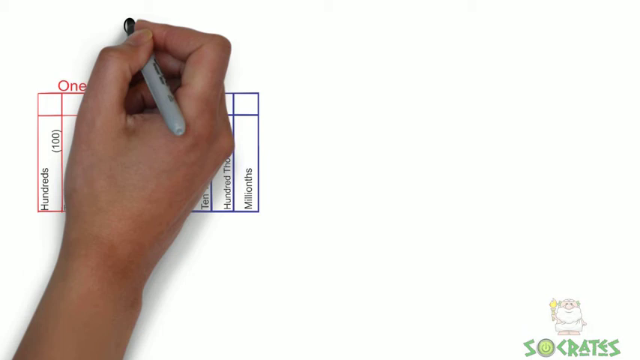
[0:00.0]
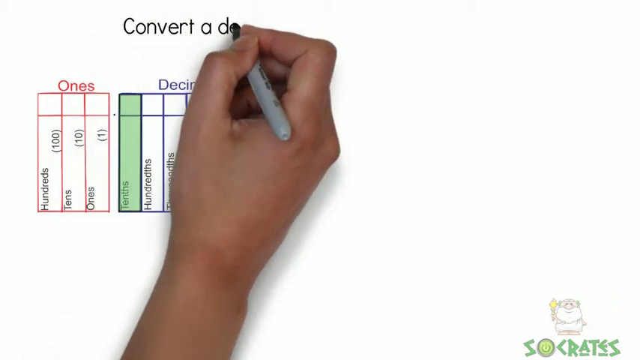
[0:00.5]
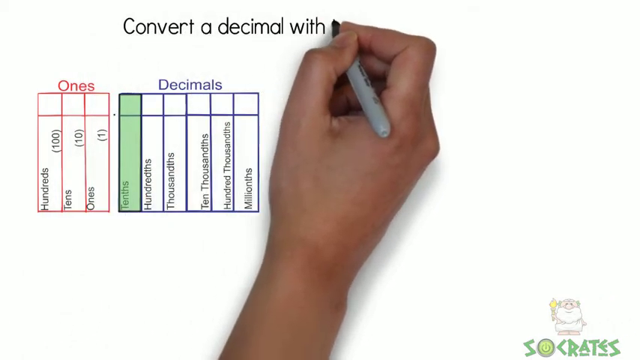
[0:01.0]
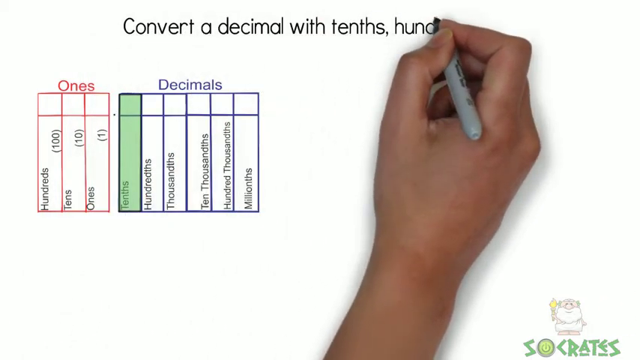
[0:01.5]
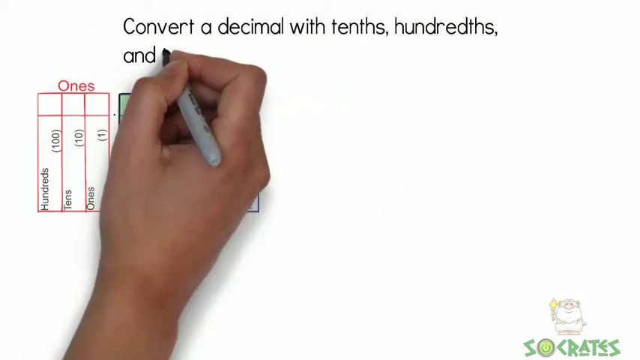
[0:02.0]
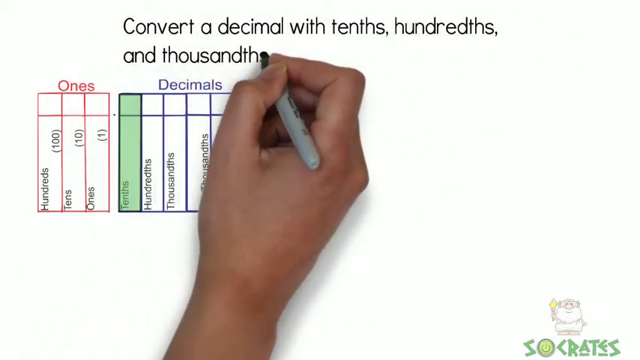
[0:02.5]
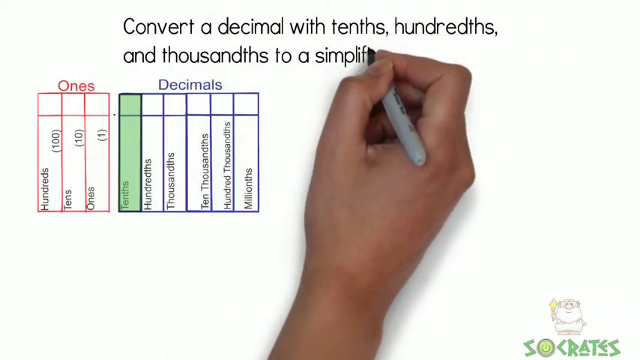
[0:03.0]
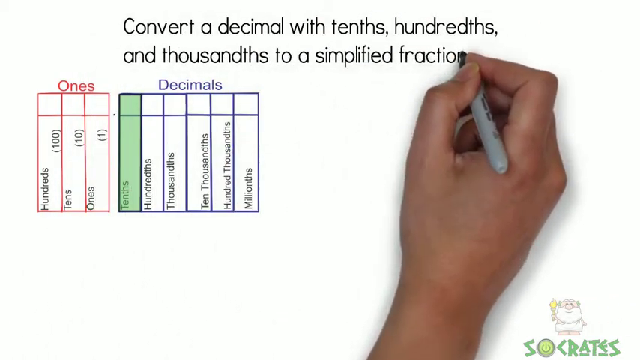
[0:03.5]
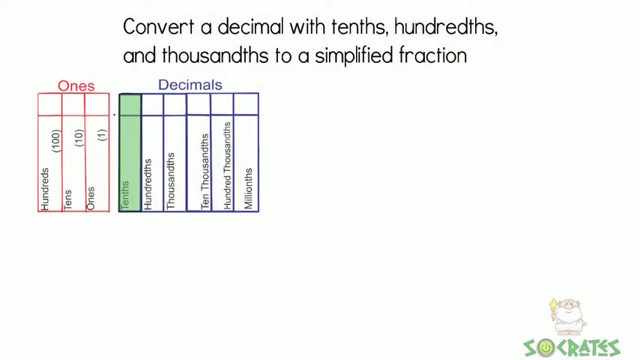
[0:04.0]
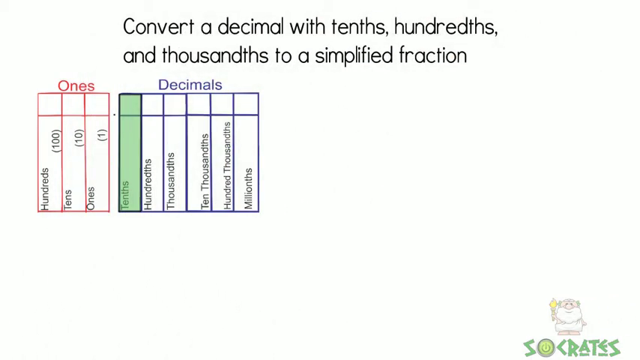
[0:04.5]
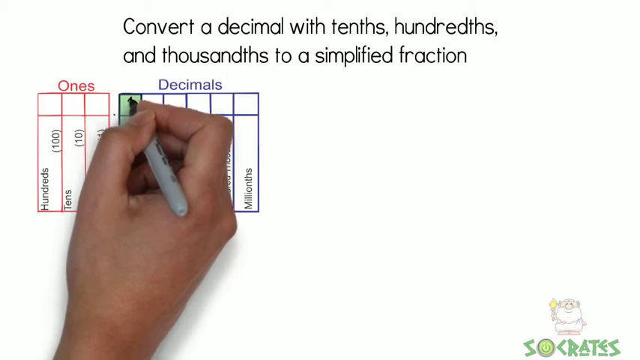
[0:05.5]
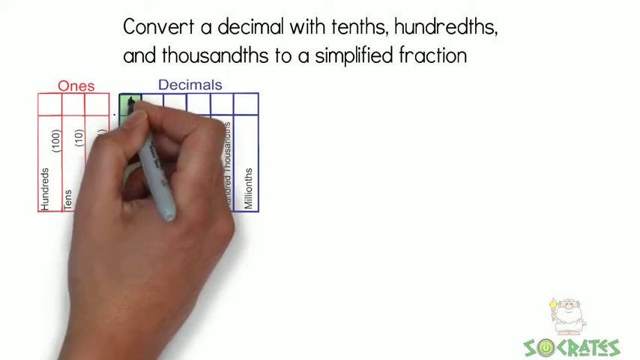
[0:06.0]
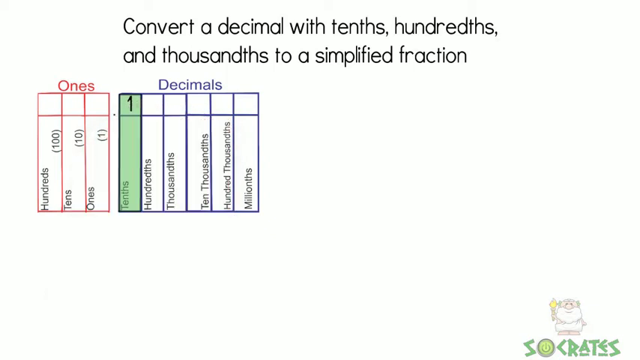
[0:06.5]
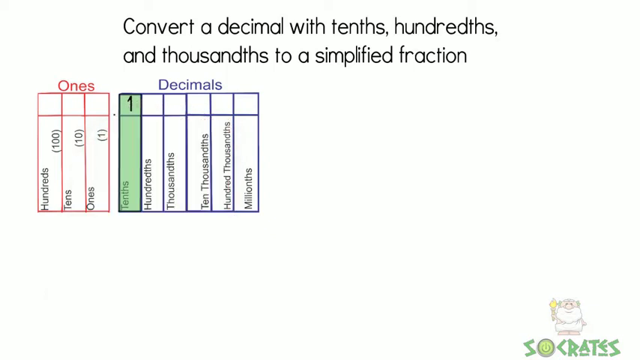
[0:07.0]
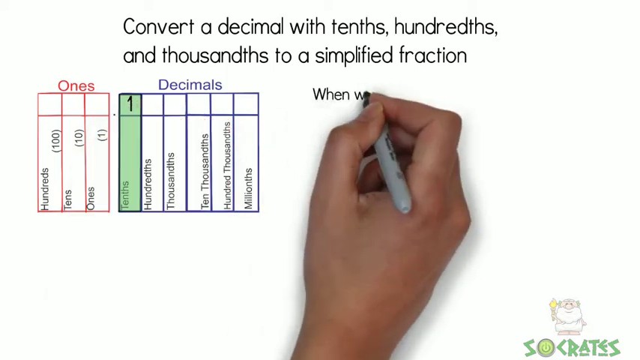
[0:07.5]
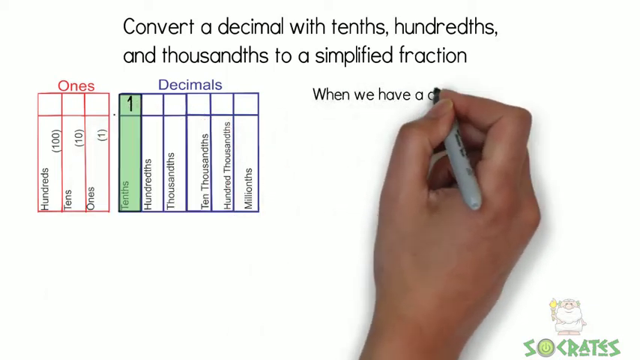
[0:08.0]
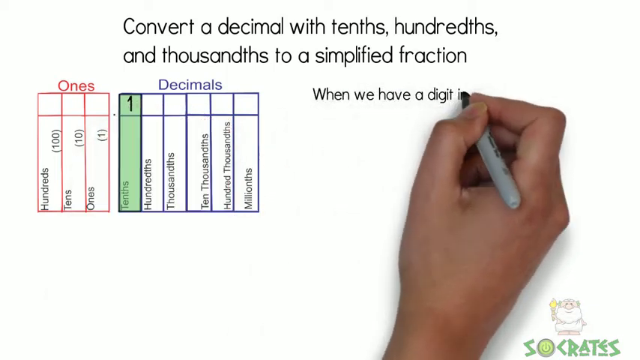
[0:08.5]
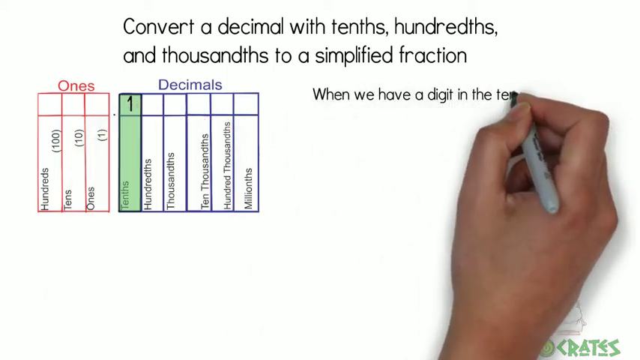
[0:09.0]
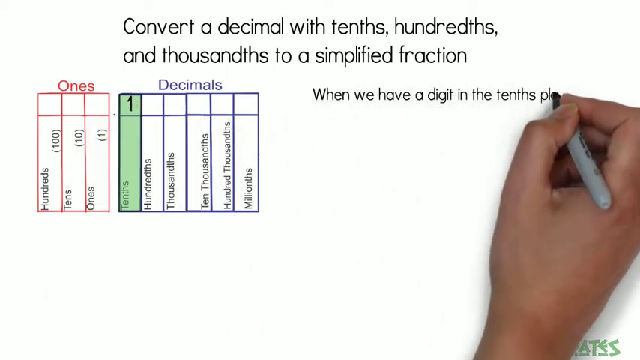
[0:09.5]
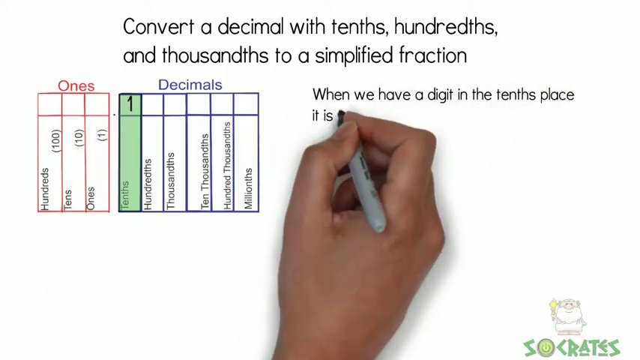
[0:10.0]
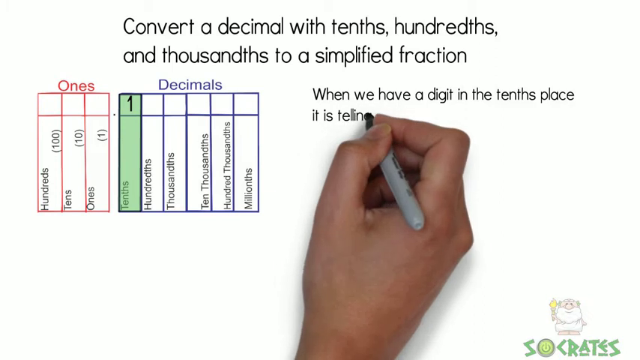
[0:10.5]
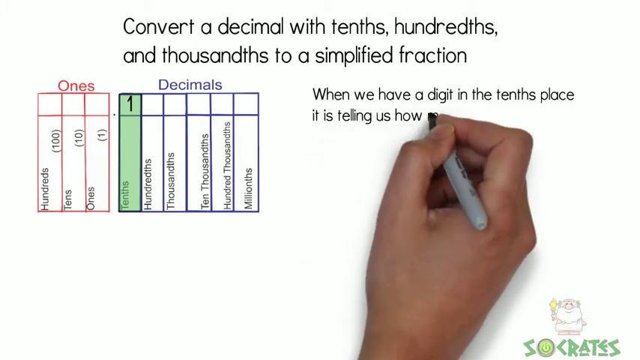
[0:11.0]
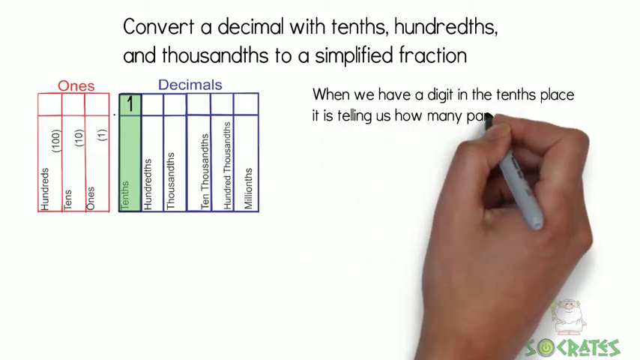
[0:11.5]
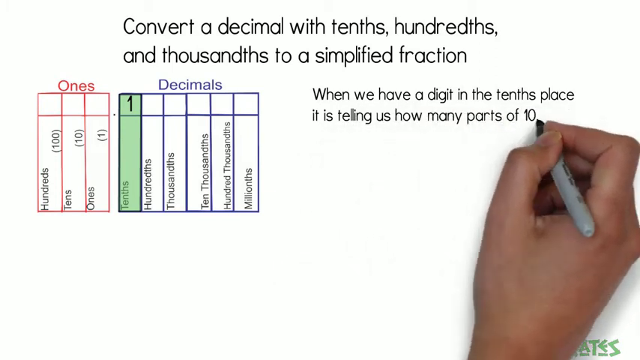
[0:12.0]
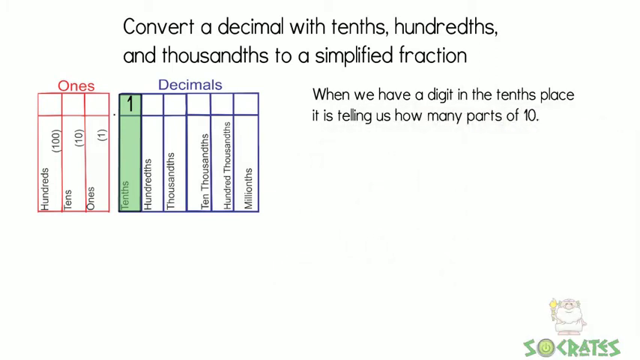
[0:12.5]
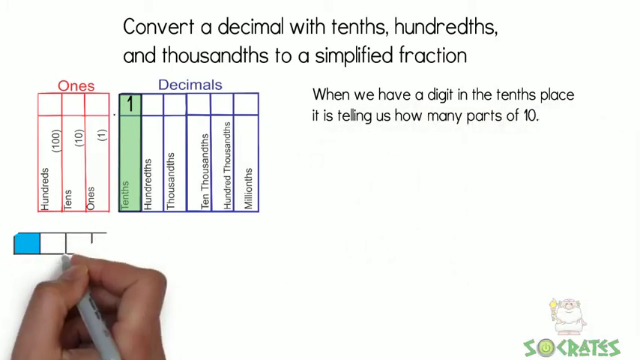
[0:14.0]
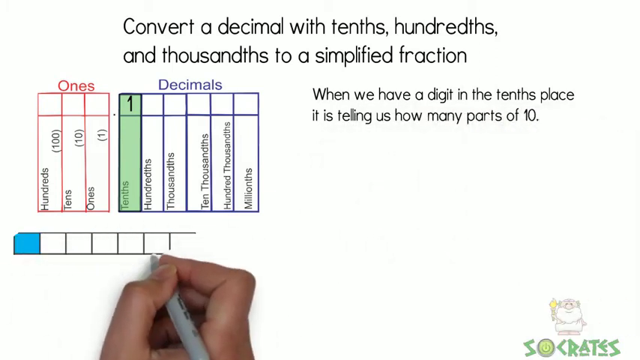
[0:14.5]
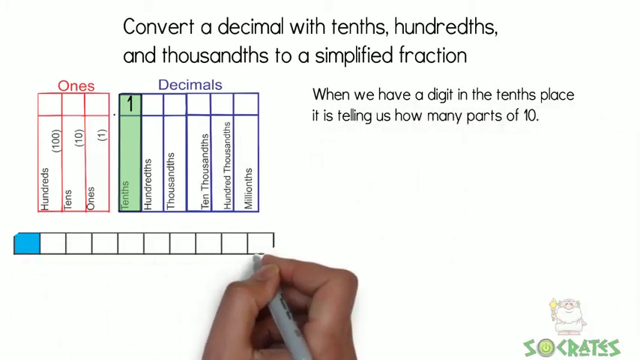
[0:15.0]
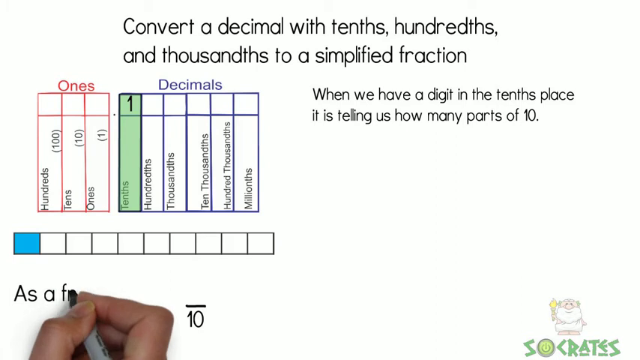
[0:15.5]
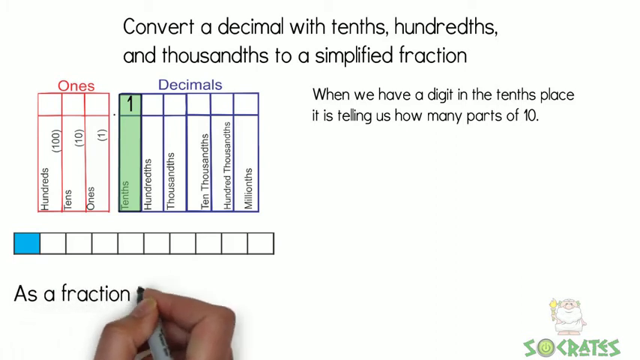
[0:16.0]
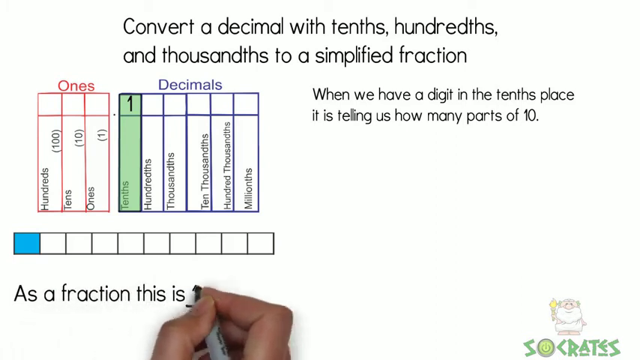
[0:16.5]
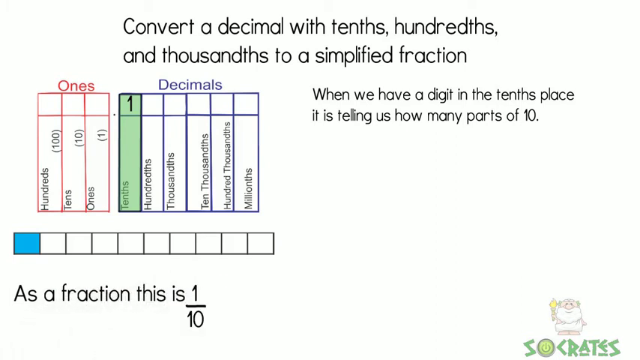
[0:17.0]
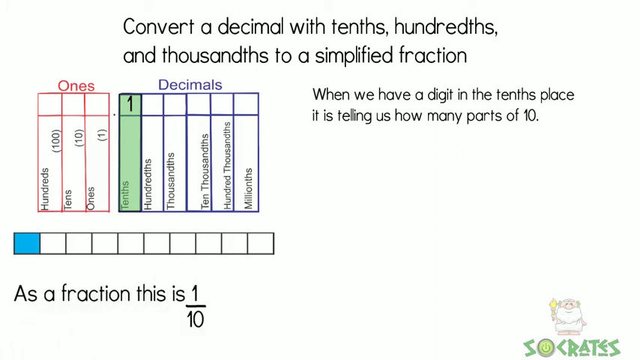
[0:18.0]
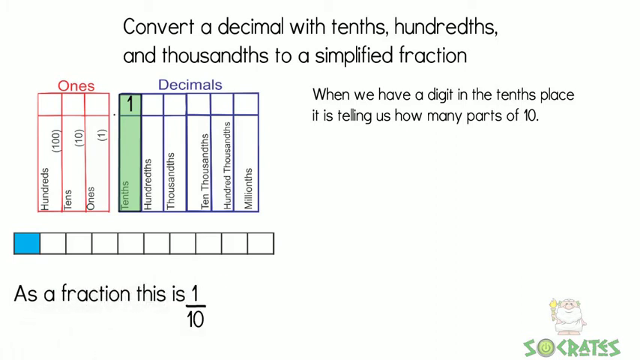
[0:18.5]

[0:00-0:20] The heading "converts a decimal with tenths, hundredths and thousandths to a simplified fraction" is written by a hand holding a black pen on a whiteboard. There are two tables: one has red lines and is labelled "ones", with columns for hundreds, tens and ones; the other is blue and is for "decimals", with columns for tenths, hundredths, thousandths, ten thousandths, hundred thousandths and millionths. The hand continues writing, and the text says "when we have a digit in the tenths place it is telling us how many parts of ten." A number 1 is written under tenths and highlighted in green. Another series of blocks is drawn, and the first block is highlighted in blue. Then "as a fraction, this is 1 divided by 10" is written. In the bottom right corner is a picture of an animal holding up a candle, with the word "SOCRATES".